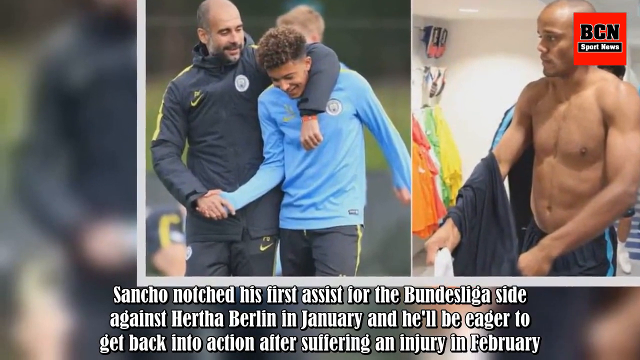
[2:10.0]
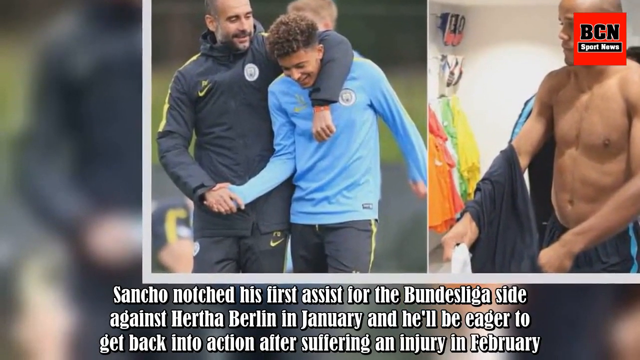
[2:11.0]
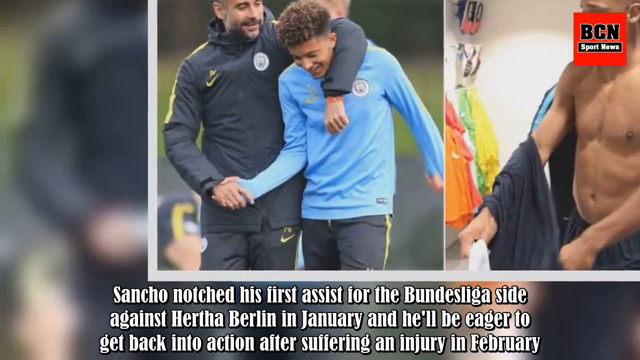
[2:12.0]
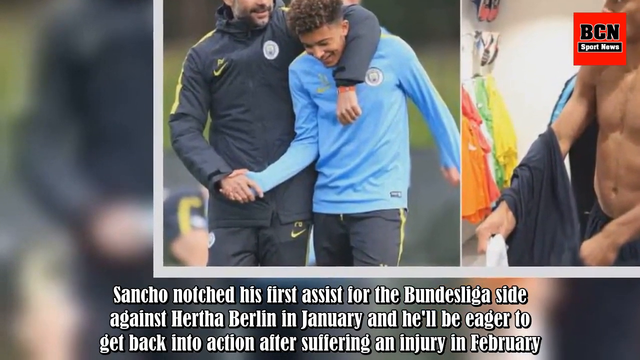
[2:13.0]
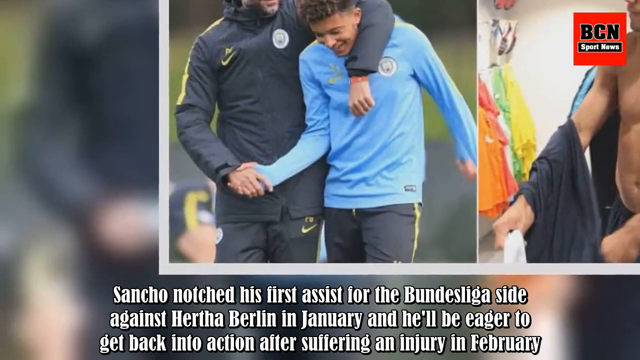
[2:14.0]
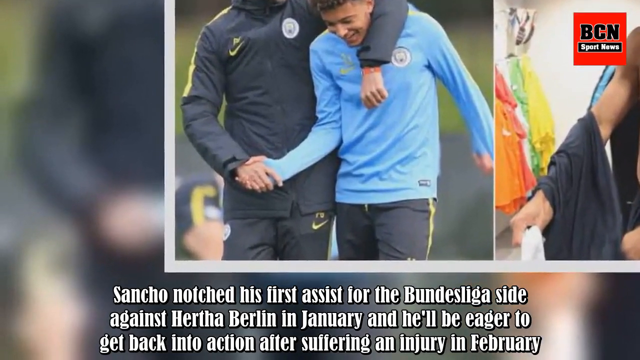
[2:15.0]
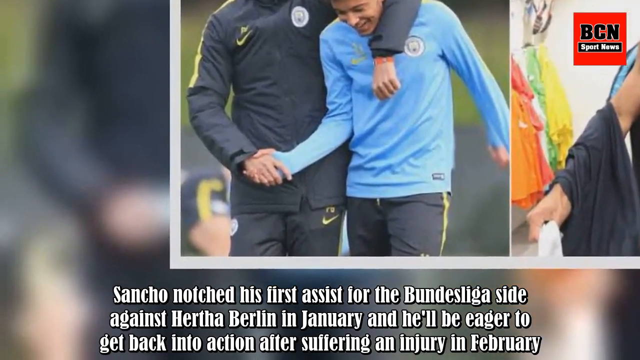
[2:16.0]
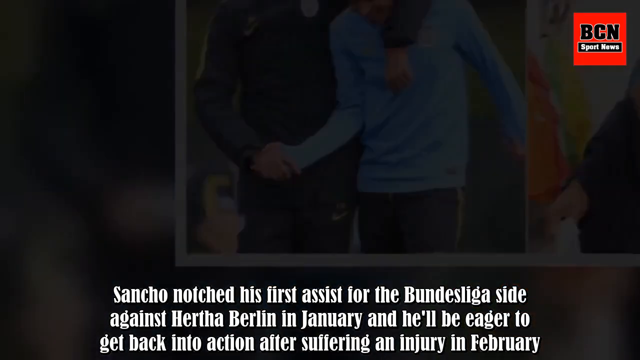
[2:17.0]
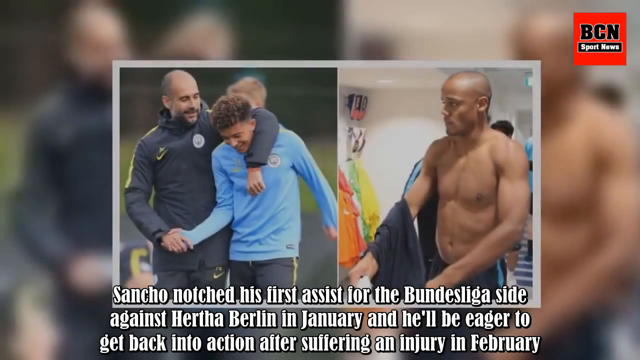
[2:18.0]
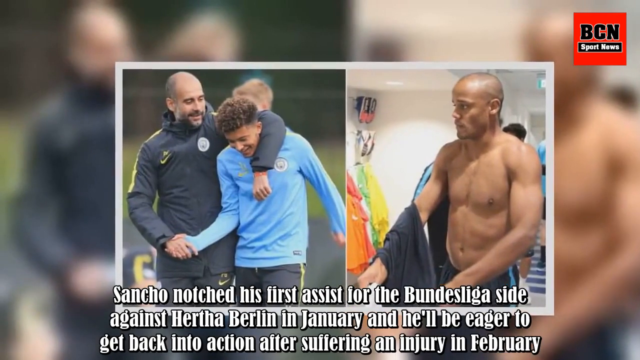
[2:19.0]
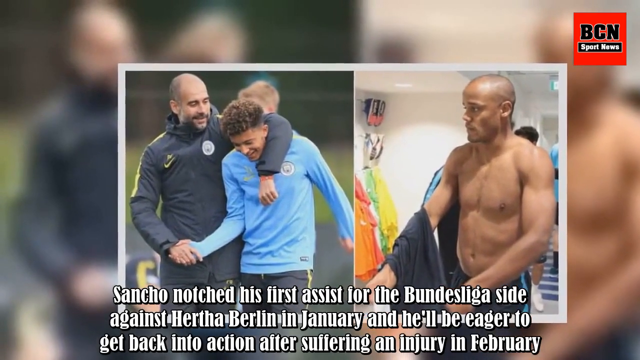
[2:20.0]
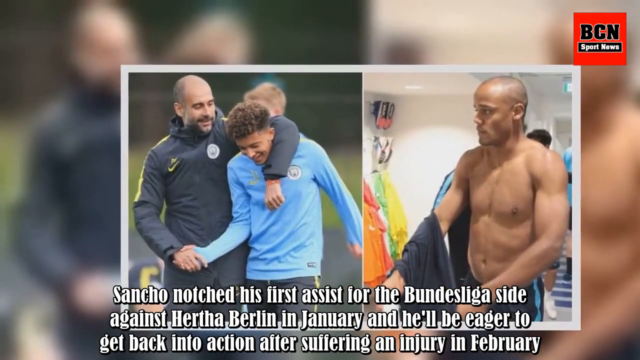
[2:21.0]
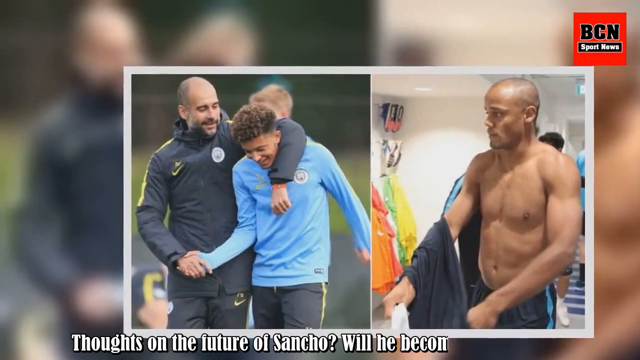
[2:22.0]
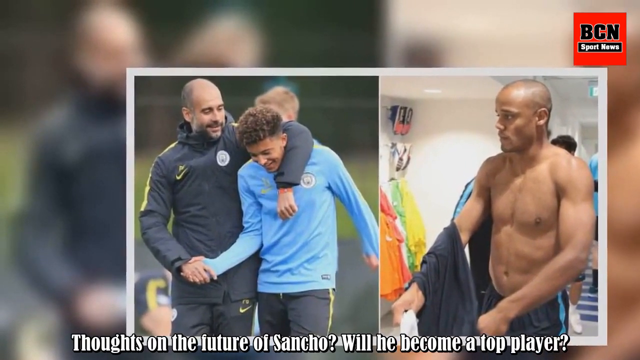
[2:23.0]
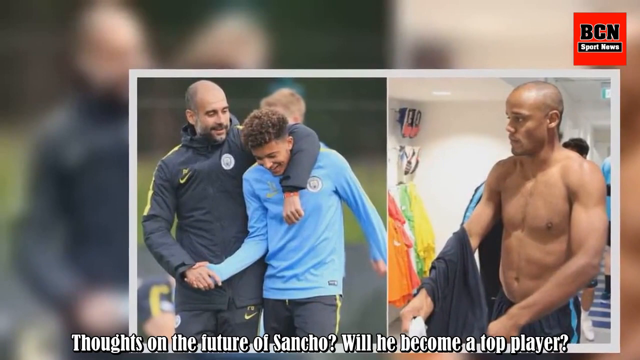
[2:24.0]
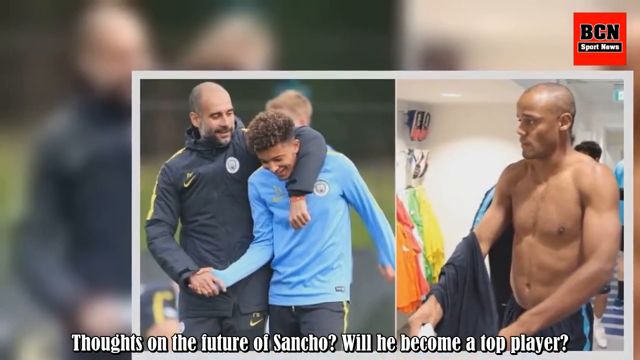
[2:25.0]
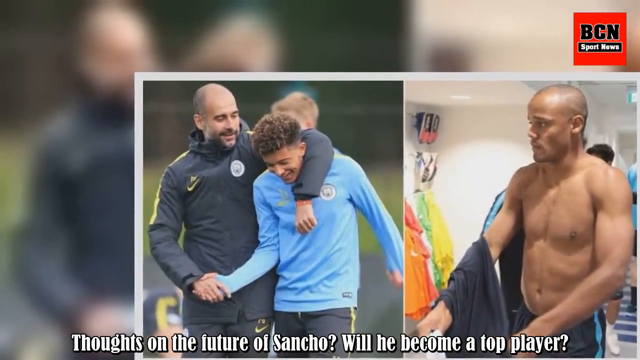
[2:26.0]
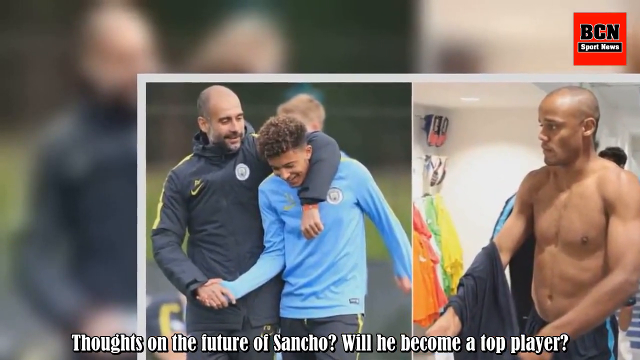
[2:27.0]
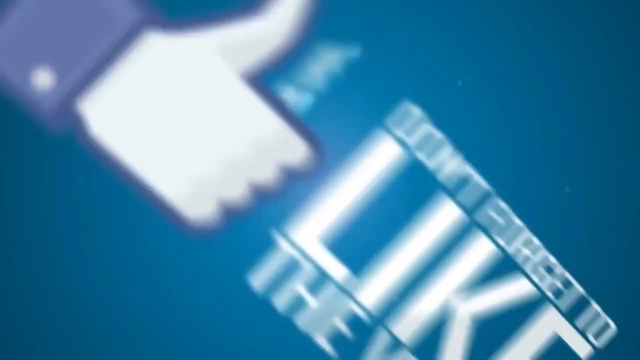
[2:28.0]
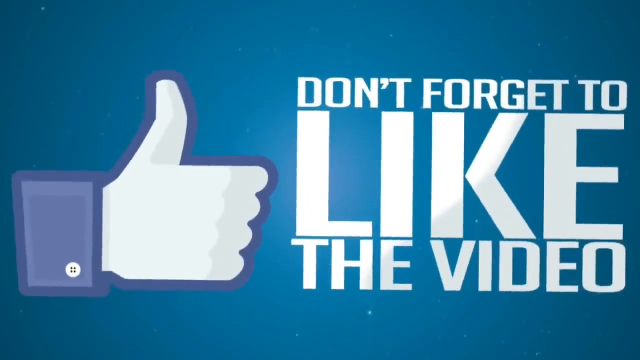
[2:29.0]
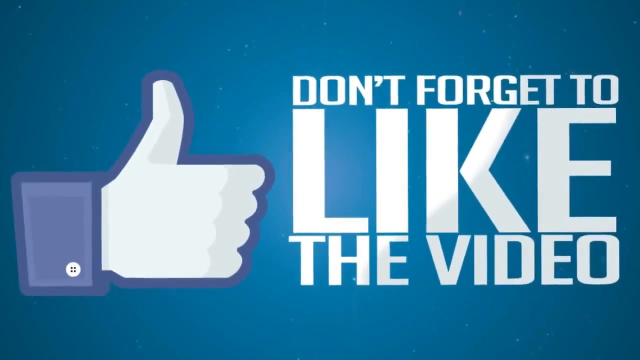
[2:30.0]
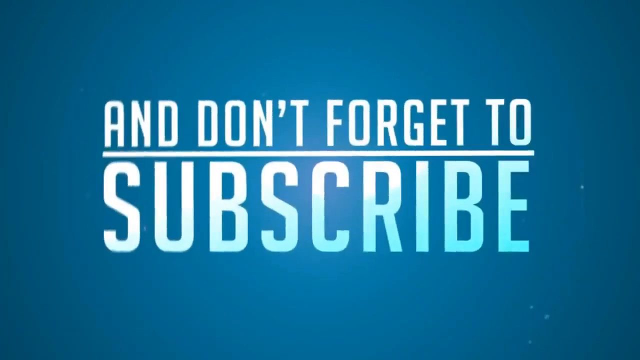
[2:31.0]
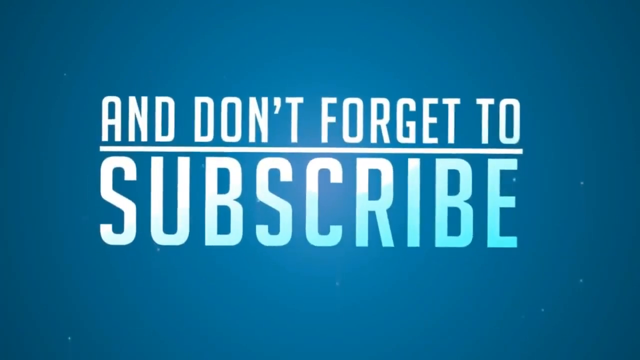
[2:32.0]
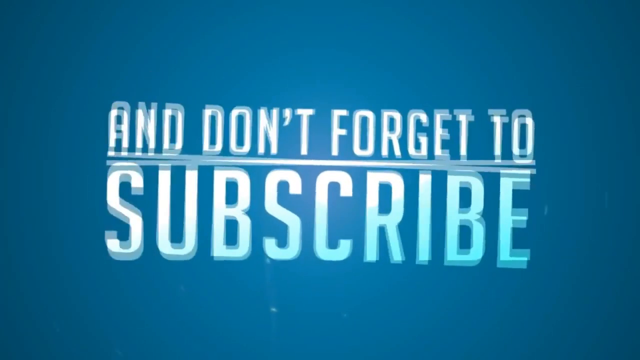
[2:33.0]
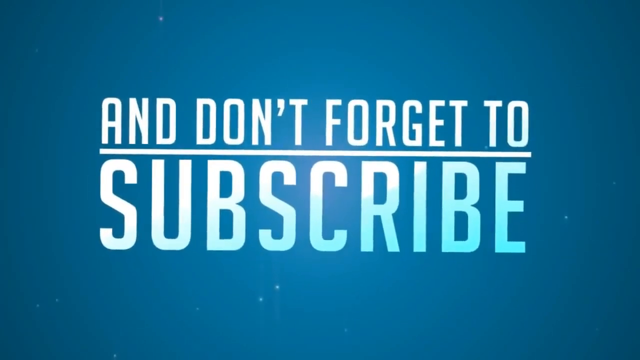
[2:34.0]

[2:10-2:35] An image shows a soccer player in a long-sleeve light blue jersey shaking the hand of another person who is hugging him. The other person is older, kind of blonde, with a gray and black beard, and wears a black jacket with yellow trim; he has his arm over the soccer player. On the right side is another image of a soccer player taking off his shirt, which is dangling over his right arm. White text is on the lower part of the screen. The camera keeps zooming in on the picture, which then fades out to black and reappears in a more zoomed-out version showing the whole picture with a white border. Within the picture are two images, and the same image, blurred out, is used as the background.